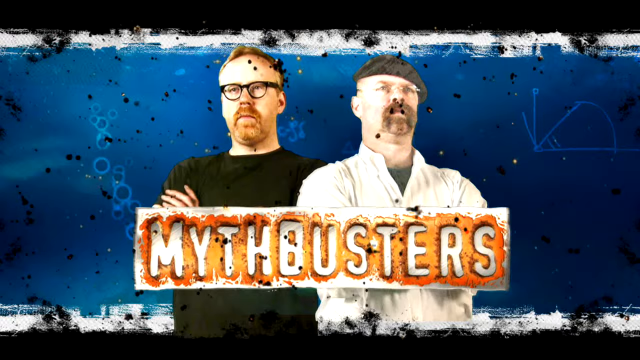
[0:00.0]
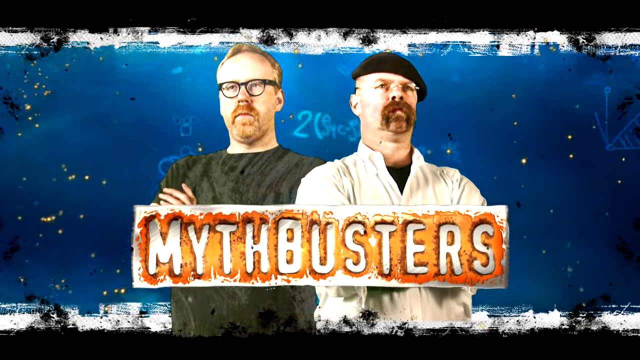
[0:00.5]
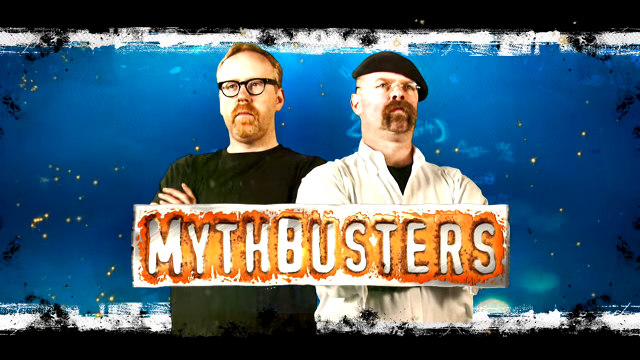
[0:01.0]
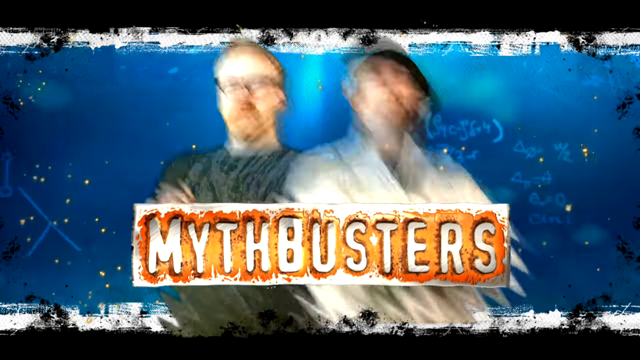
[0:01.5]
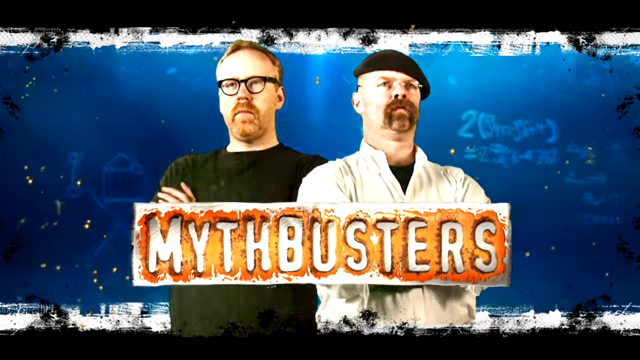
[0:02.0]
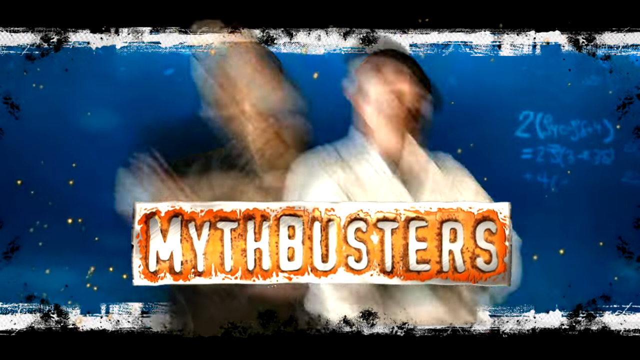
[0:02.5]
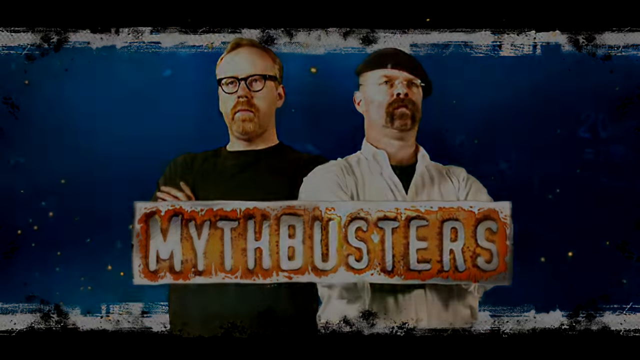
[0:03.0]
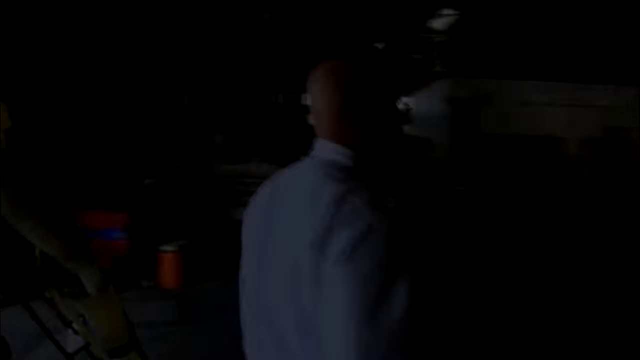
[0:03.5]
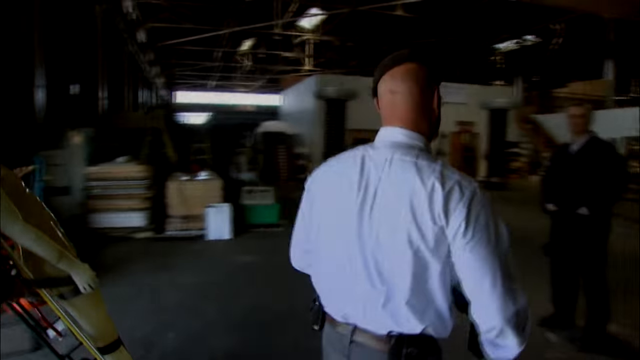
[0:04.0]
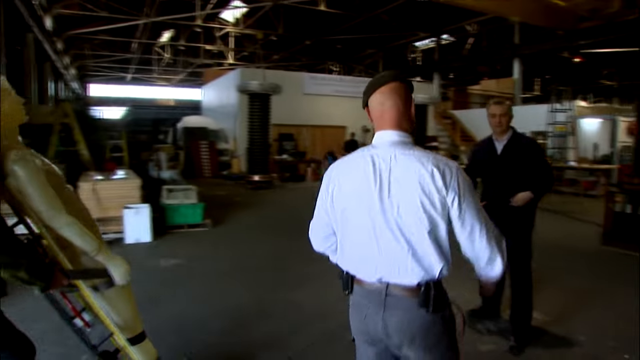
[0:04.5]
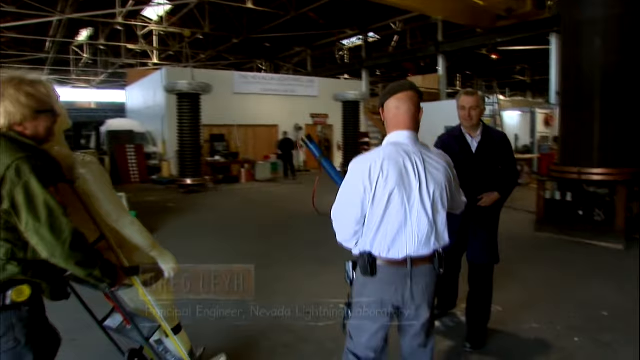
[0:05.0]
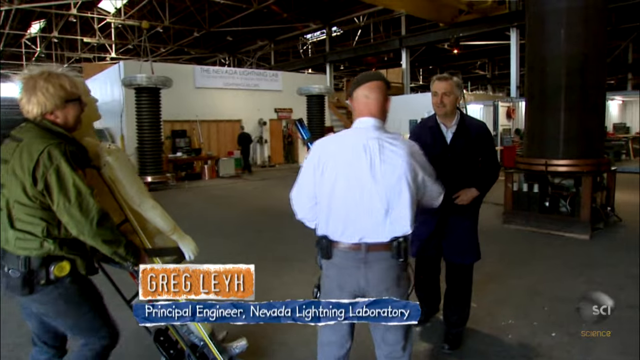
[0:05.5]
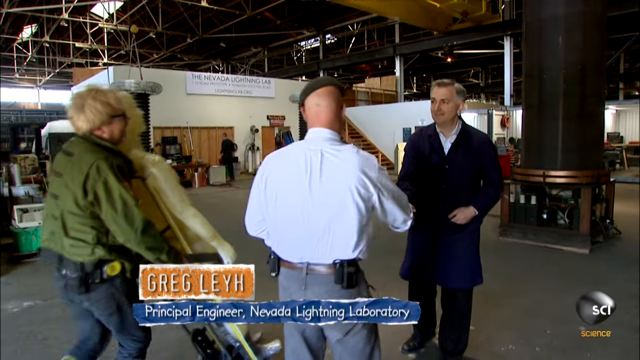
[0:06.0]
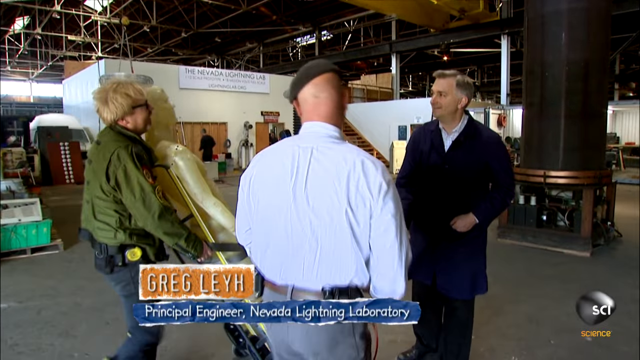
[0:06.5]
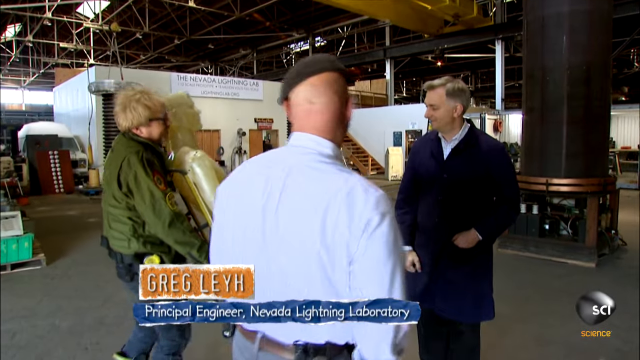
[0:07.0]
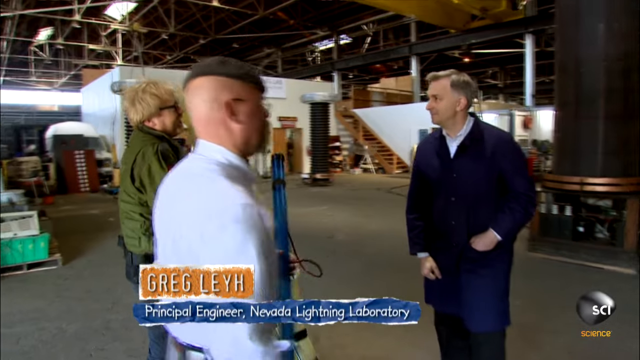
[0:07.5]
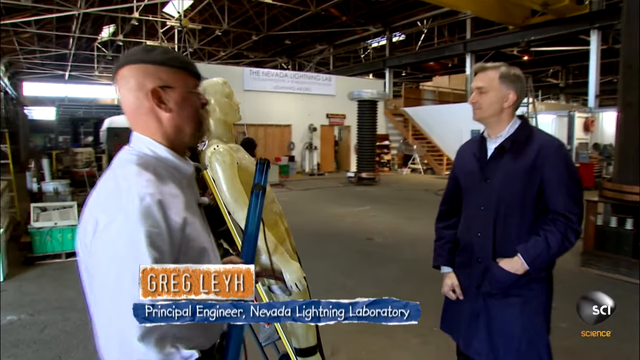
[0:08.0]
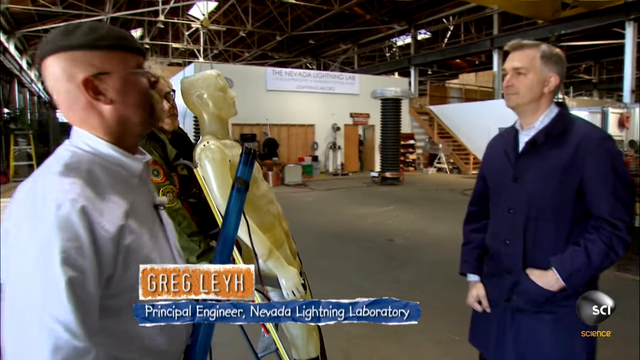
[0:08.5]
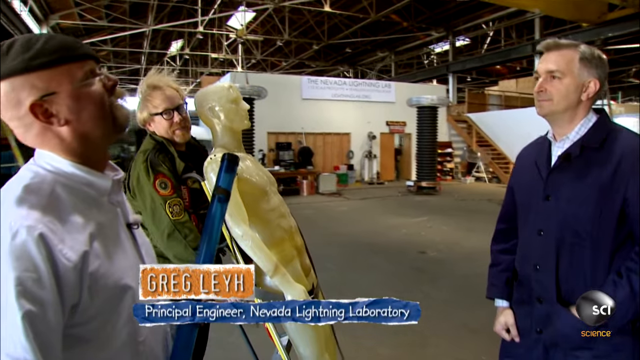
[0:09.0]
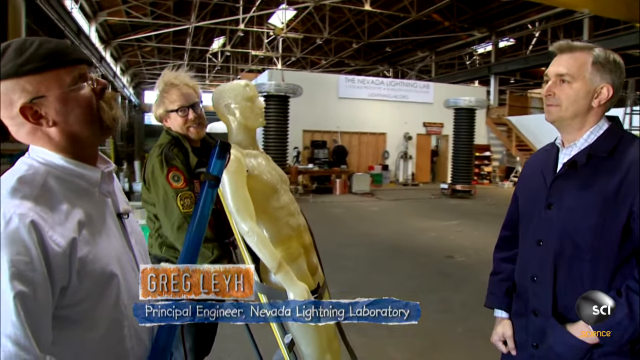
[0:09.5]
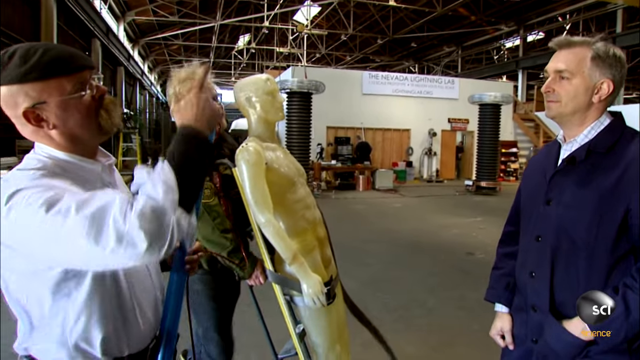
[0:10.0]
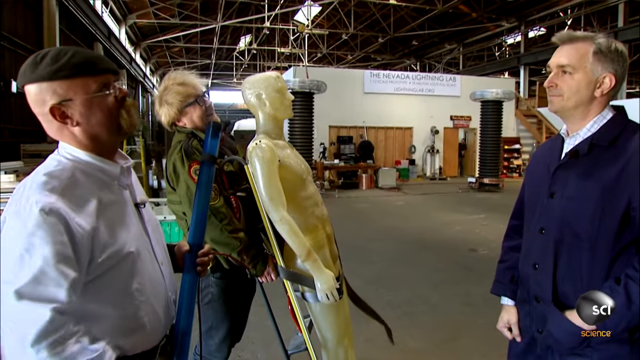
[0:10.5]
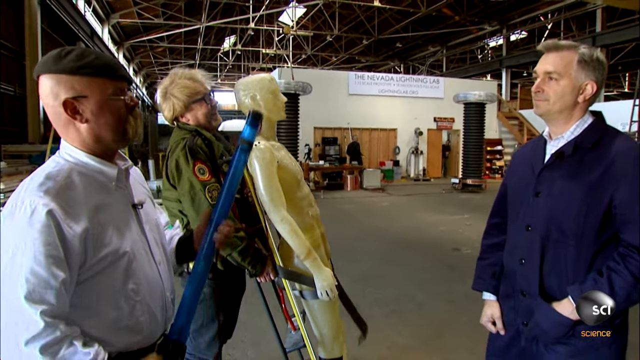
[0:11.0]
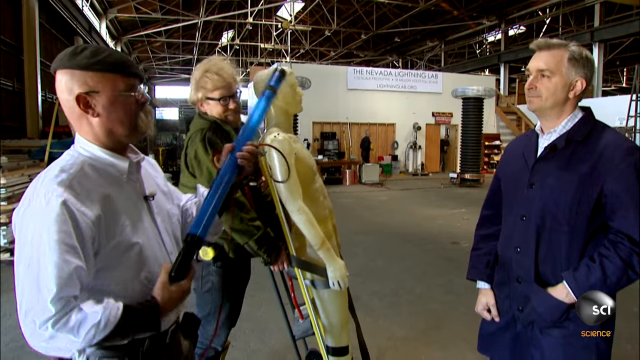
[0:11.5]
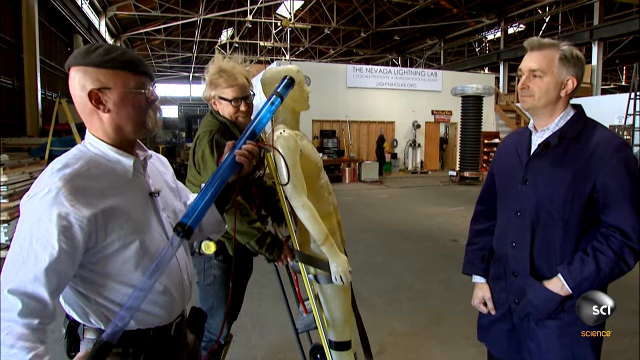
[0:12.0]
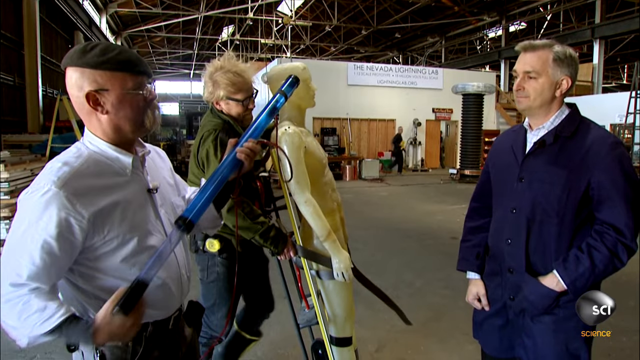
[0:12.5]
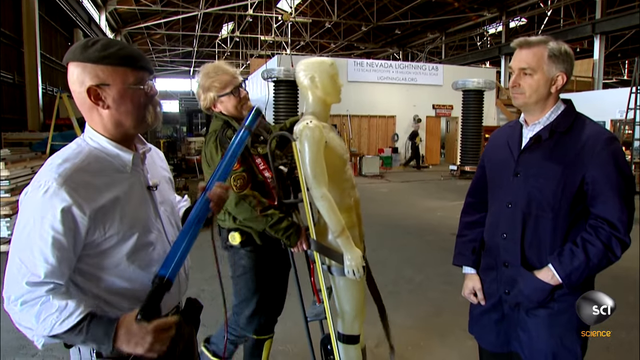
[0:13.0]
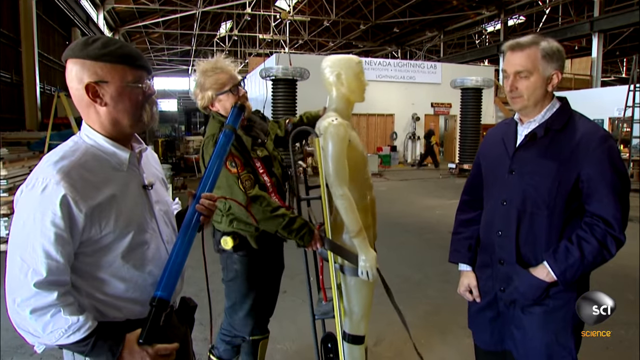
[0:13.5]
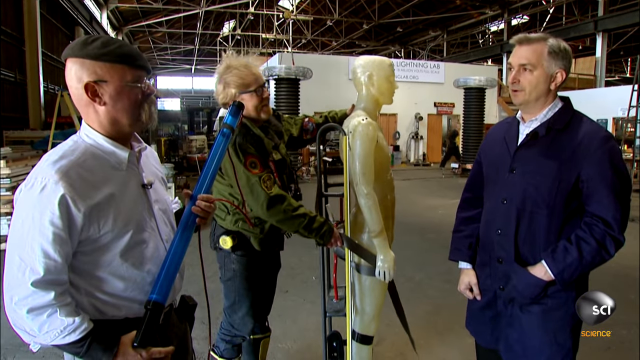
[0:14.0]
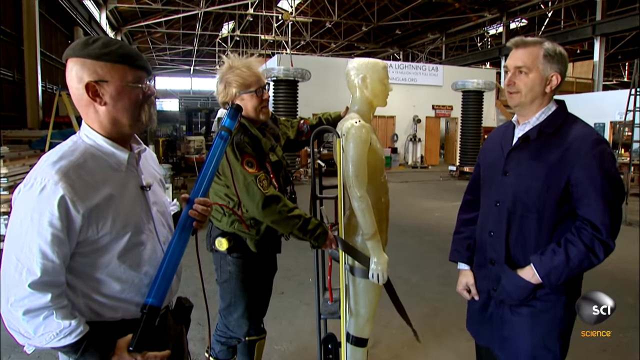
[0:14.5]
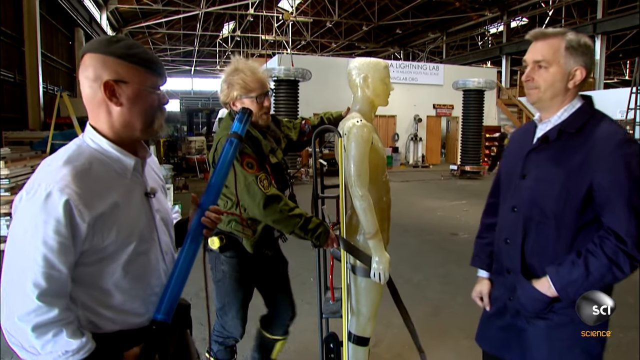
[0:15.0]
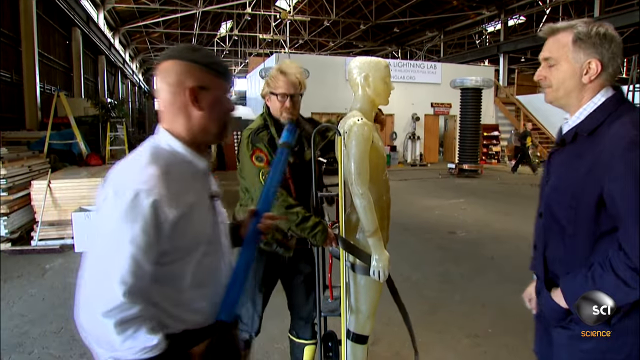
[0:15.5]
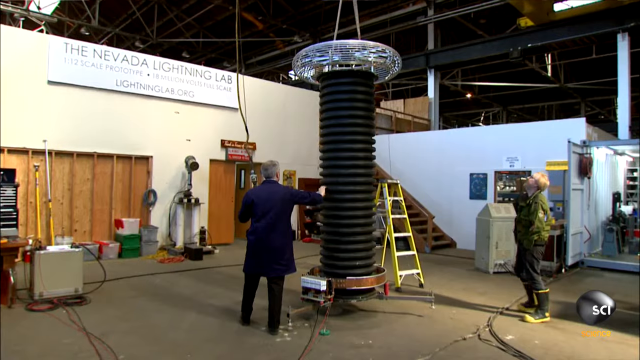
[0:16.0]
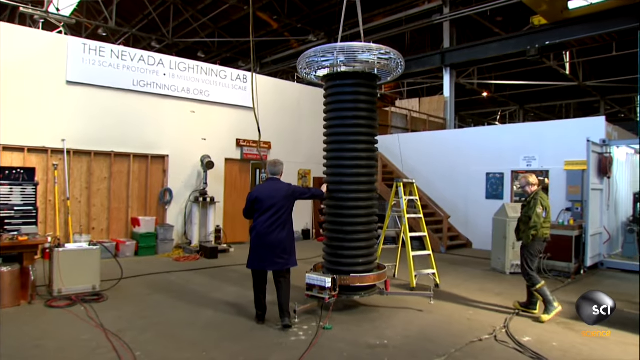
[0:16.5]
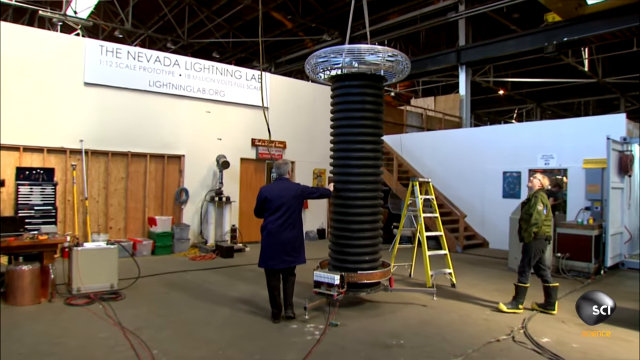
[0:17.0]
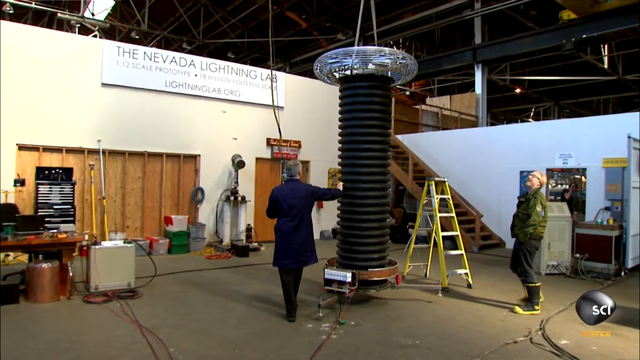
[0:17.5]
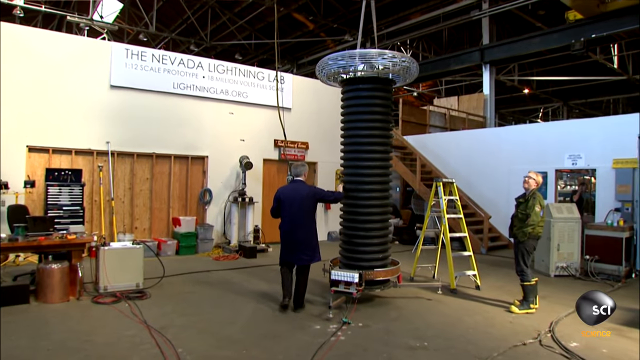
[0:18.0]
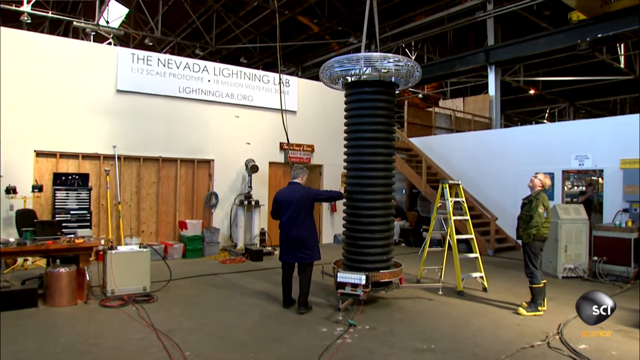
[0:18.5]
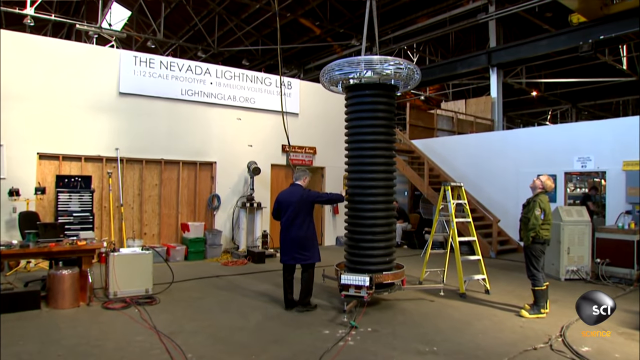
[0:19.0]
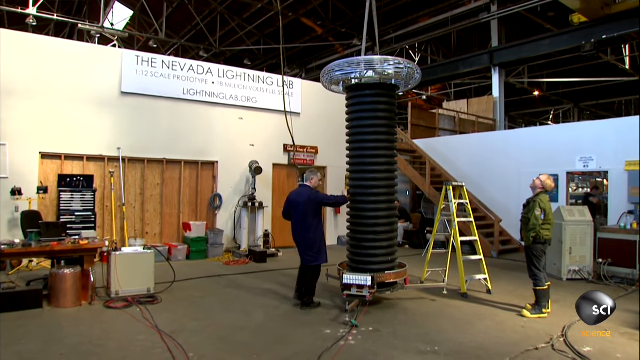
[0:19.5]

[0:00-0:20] A section of the show Mythbusters features two men. The man on the left, apparently the younger one, has reddish hair, glasses, and a reddish mustache and goatee. The other man seems to be wearing a hat, and he also has a mustache, a goatee and glasses. They meet with Greg Lay, a principal engineer at the Nevada Lightning Laboratory, and shake hands. The place looks like an industrial area; it is a laboratory where testing is done. A plastic mannequin is brought in. The men look up, and one of them looks at his co-host. Wind is blowing, and one man's hair waves around in it. The man wearing white has something like a super soaker. Greg welcomes them. Then there is something that looks somewhat like a slinky: black tubing standing straight up and moving around, big enough for a whole person to fit inside, taller than a person, about the height of two people. At the top is a clear rounded area, and the whole thing kind of resembles a huge version of the colored stacking rings babies put on a cone. He moves it into place.